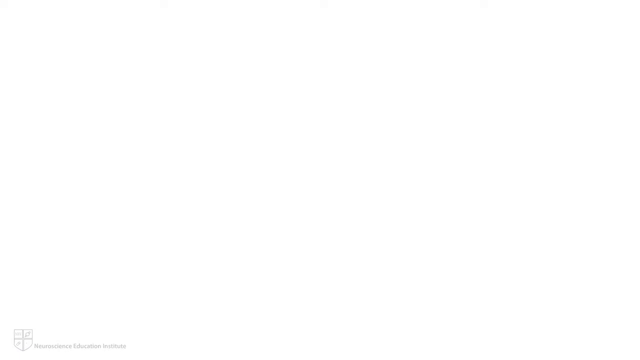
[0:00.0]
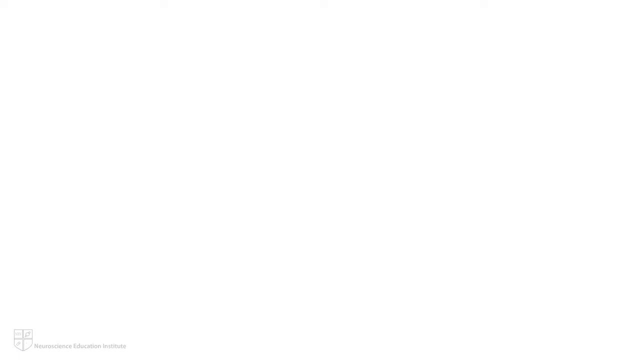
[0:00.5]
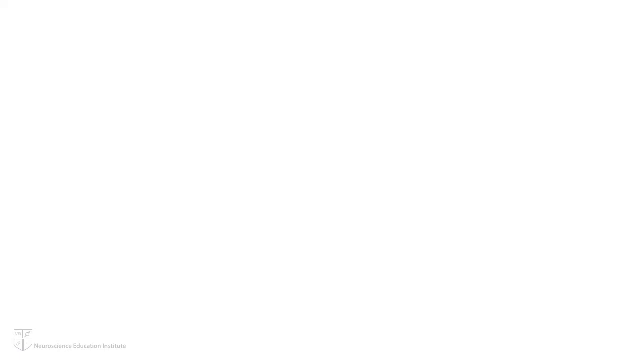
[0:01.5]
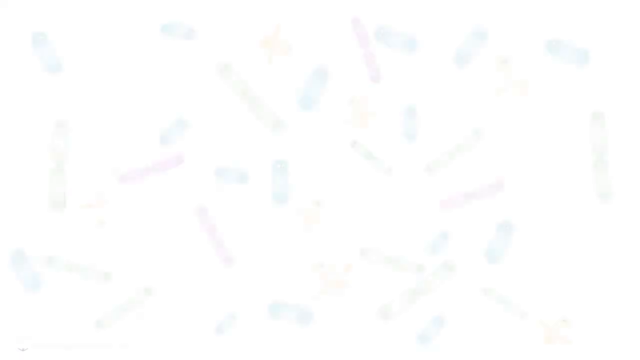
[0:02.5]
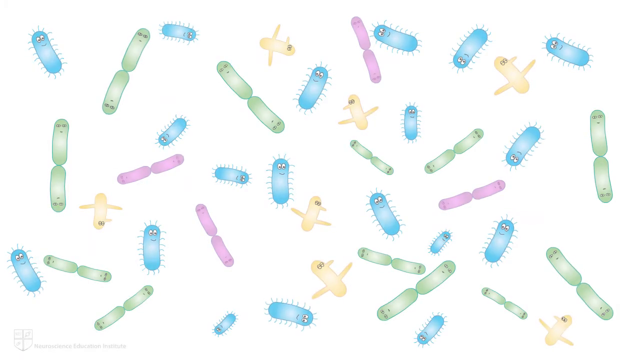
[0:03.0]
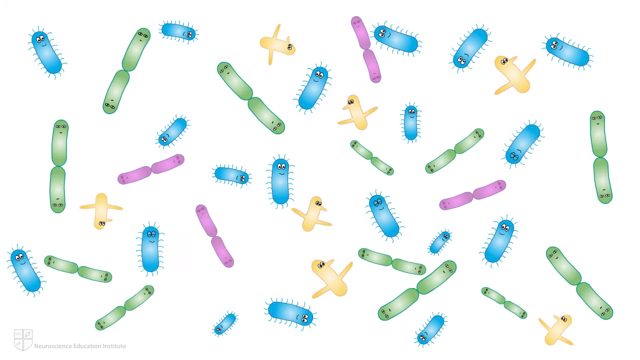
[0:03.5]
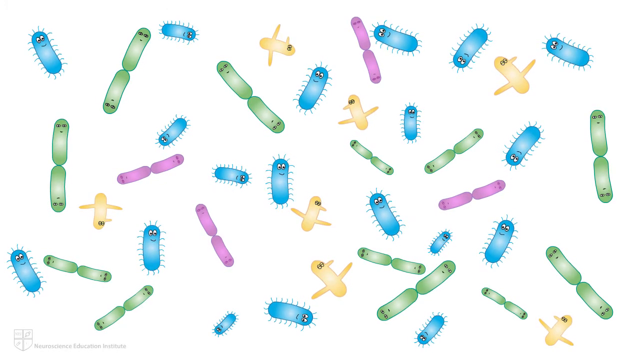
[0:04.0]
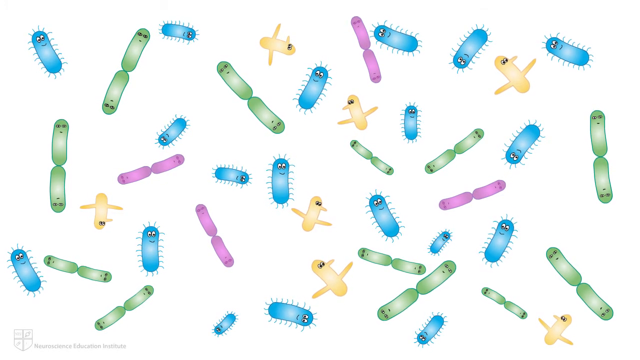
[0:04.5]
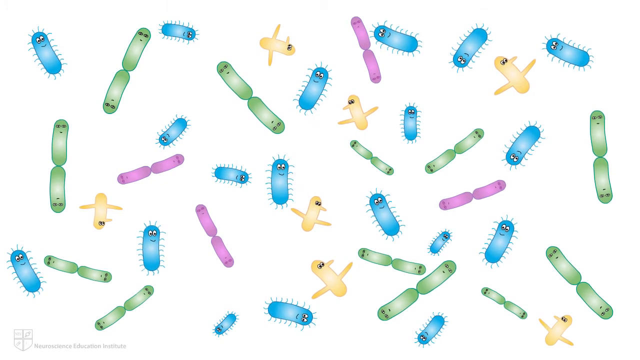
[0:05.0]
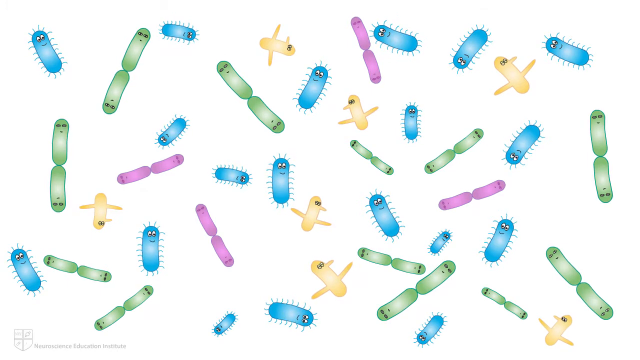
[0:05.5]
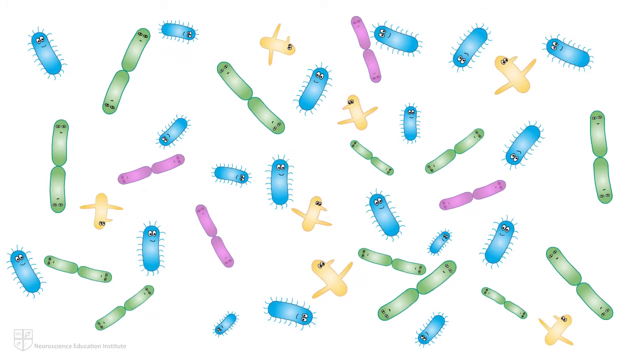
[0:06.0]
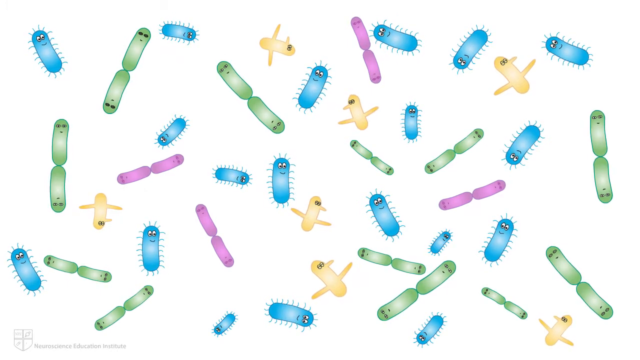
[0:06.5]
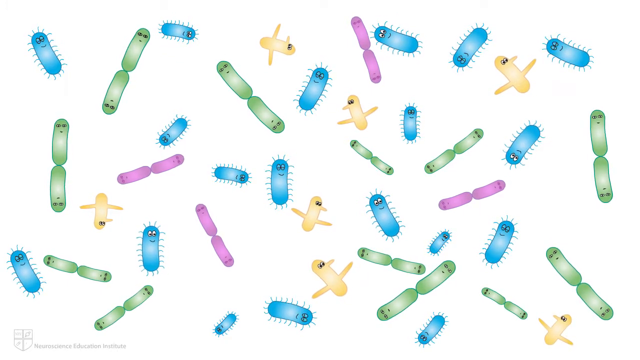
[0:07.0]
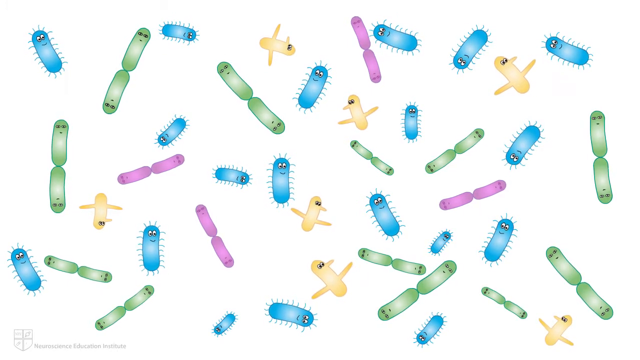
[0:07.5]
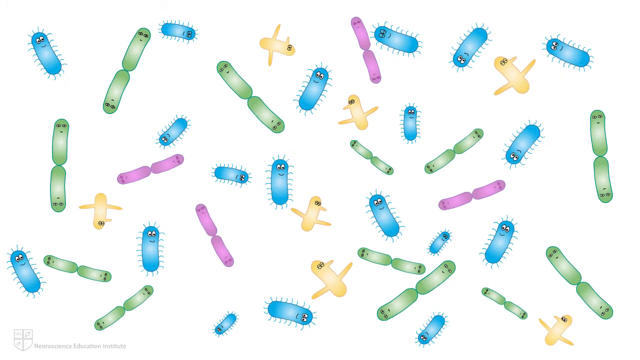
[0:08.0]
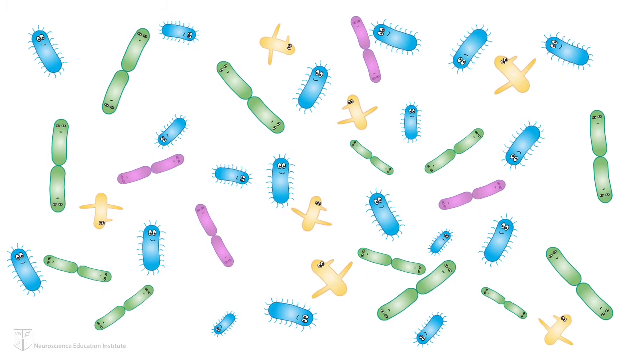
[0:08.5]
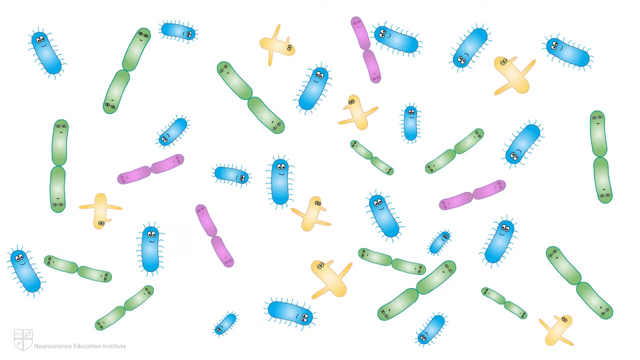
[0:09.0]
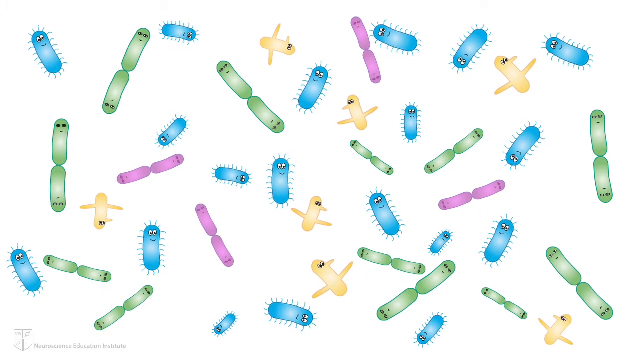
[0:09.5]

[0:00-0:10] The video opens on a white screen, and then a watermark reading "Neuroscience Education Institute" appears in the bottom left corner. Next come cartoon renditions of what look to be bacteria, in four different kinds. One is a blue cylinder with eyes and a smile, with various blue lines coming off its edges. Another is two green cylinders attached at the bottoms, with faces on the opposing sides. A third is a yellow cylinder with just eyes and two large arms coming off its bottom half. The last is two purple cylinders connected at the very bottom, also with faces, similar to the green one. The bacteria sort of pulsate and move up and down on a white background.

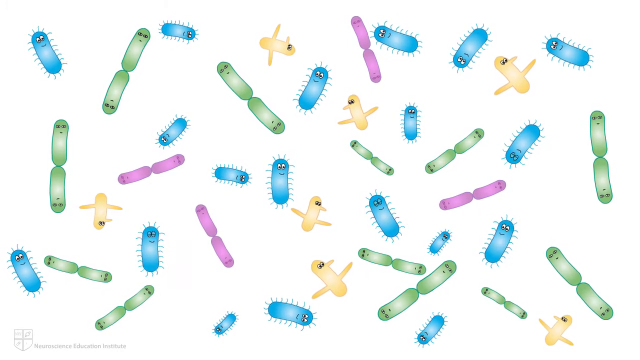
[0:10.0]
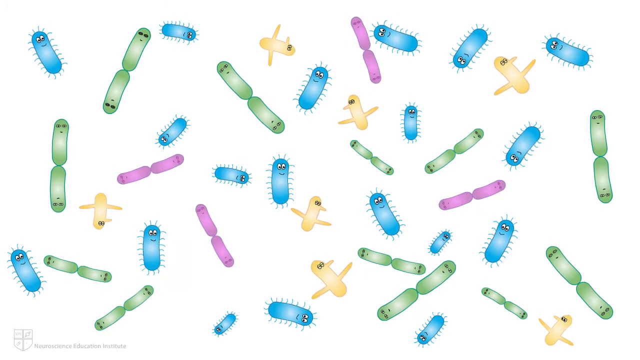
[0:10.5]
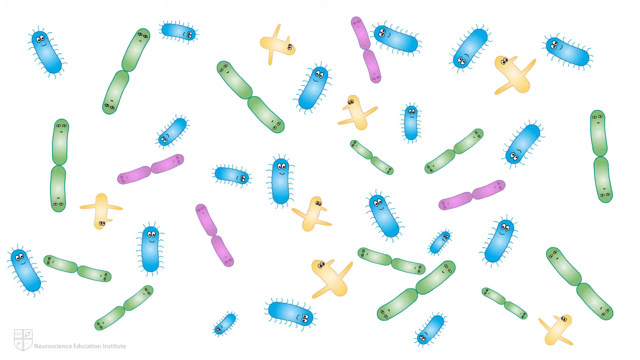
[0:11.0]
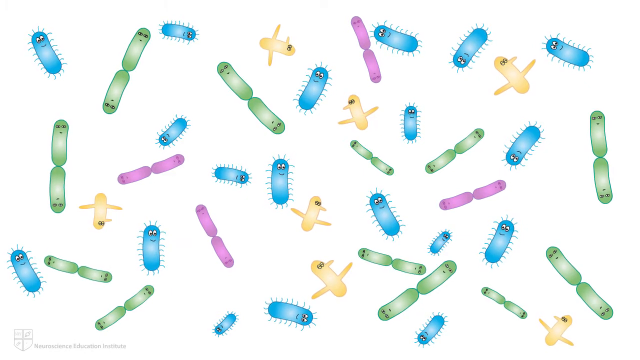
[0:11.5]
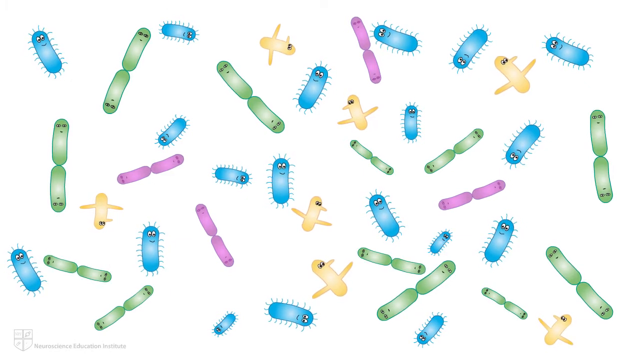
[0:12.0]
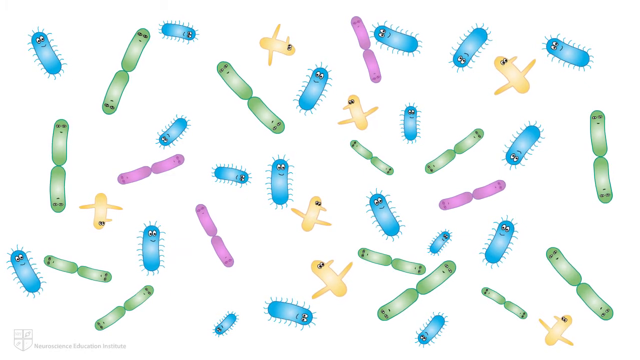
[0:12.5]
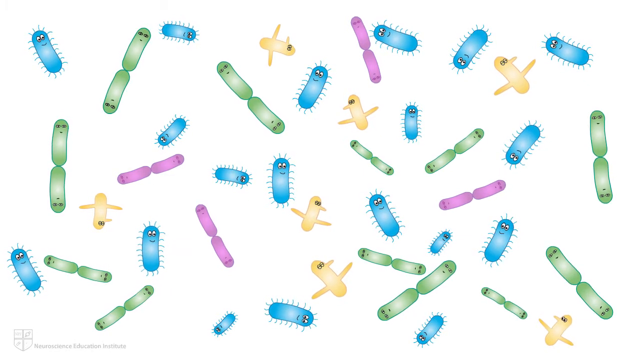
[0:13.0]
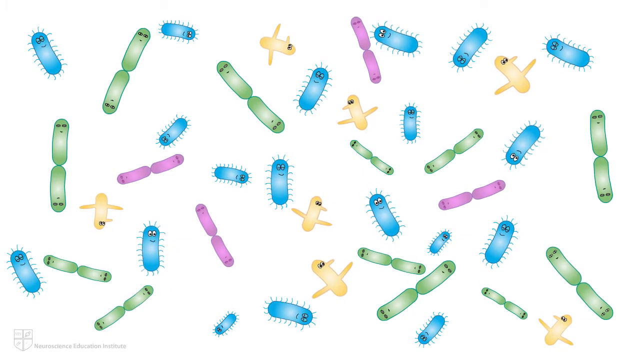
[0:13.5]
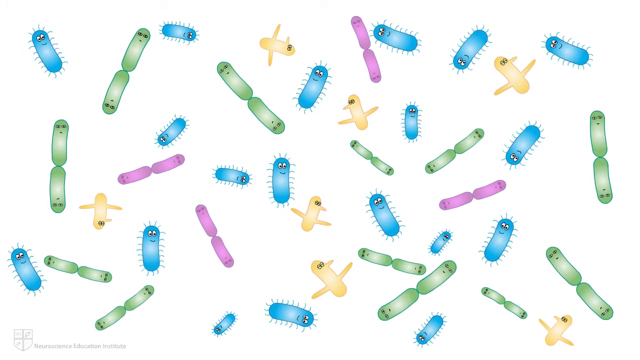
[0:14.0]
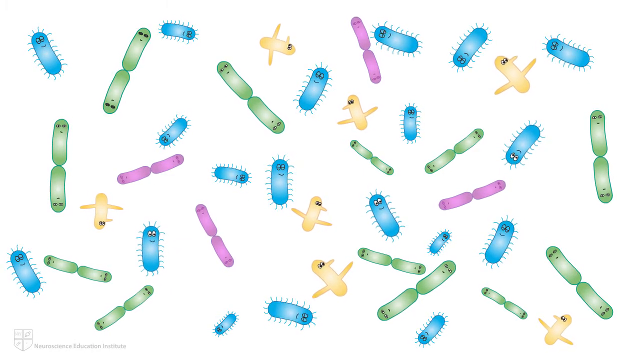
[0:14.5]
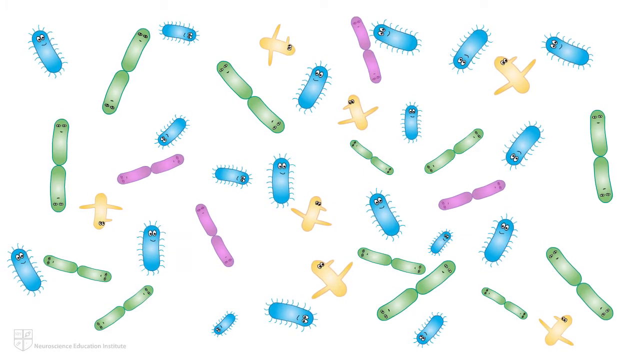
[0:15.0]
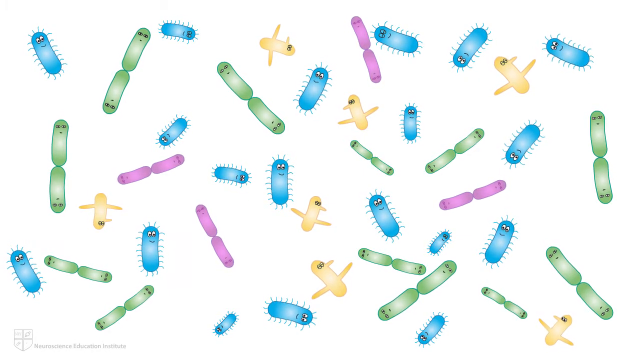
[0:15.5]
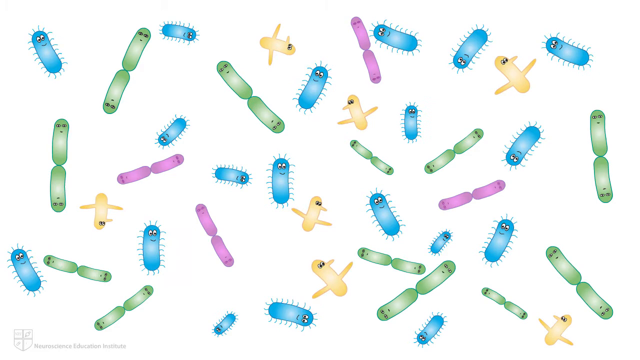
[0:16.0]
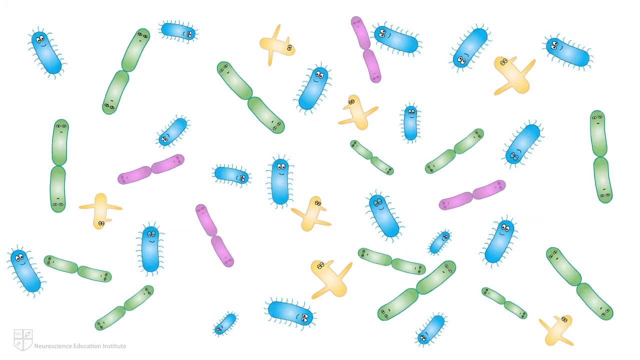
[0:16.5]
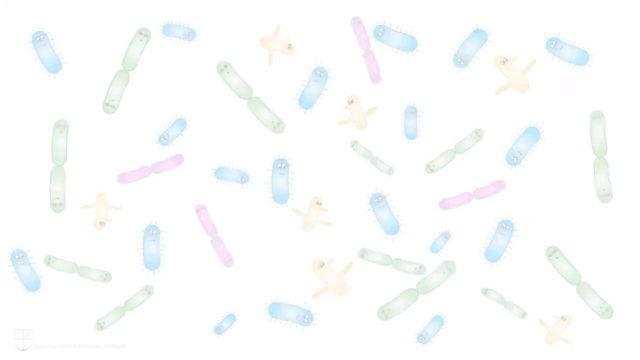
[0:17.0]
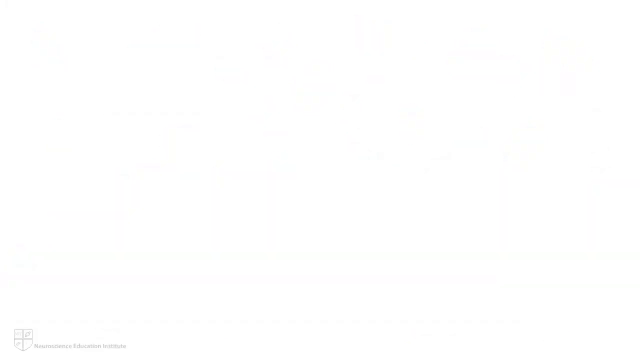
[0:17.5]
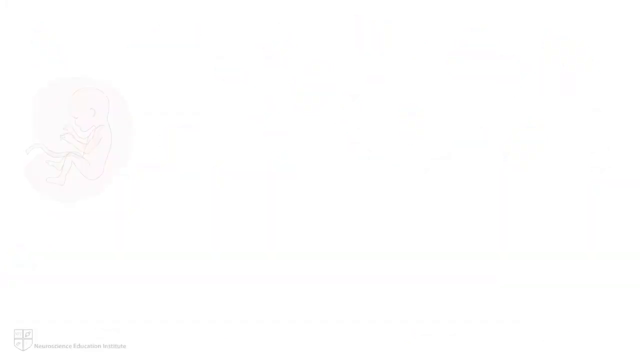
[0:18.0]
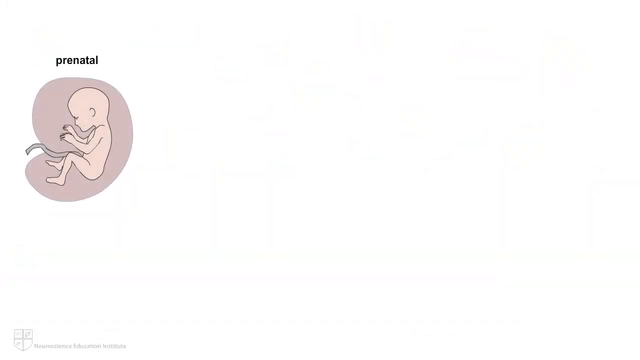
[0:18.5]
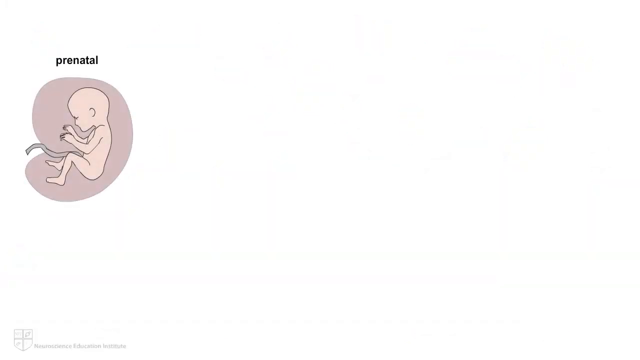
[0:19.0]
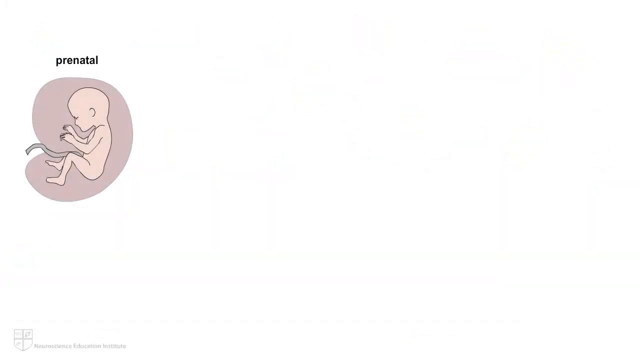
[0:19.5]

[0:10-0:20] Cartoon bacteria seem to pulsate and move up and down on a white background, occasionally blinking their cartoon faces. Eventually the screen turns white and a drawing appears on the left side of the screen: a small baby in a womb, facing left, with an umbilical cord coming from its stomach, labeled "prenatal" in black text. A dotted black line and a magnifying glass appear on the baby's stomach, and a sort of zoomed-in view of the stomach shows toward the bottom right of the image, containing a blue cylinder bacterium and a green double-sided cylinder bacterium drawn in the cartoon style.